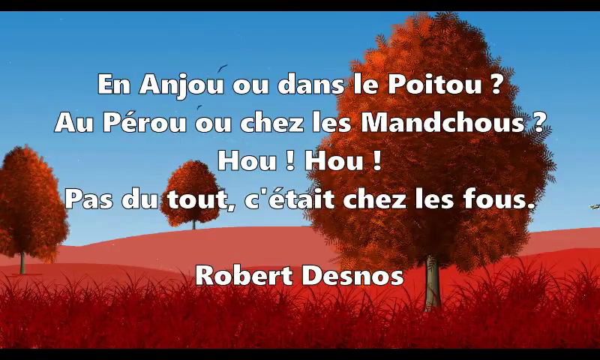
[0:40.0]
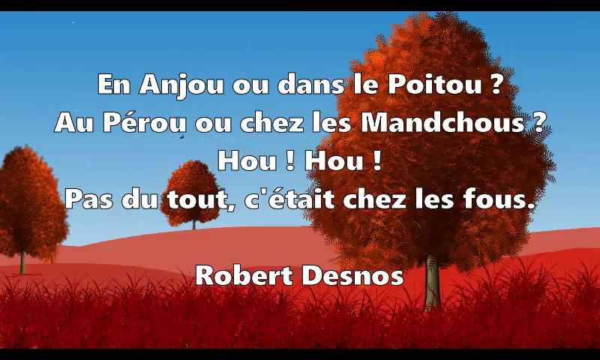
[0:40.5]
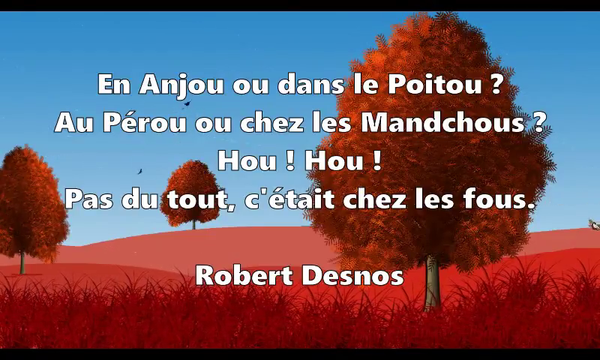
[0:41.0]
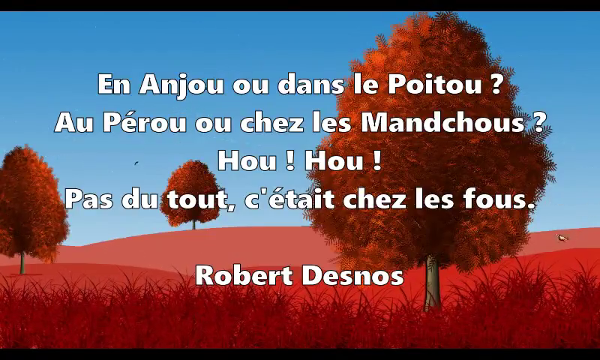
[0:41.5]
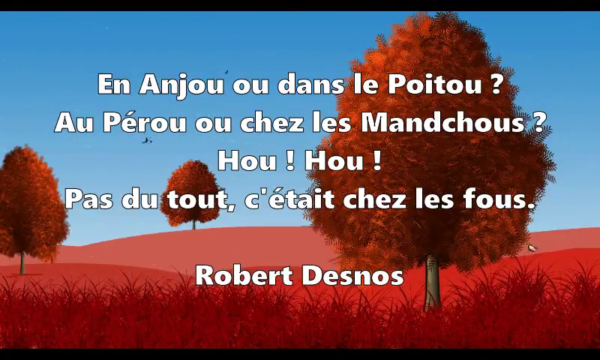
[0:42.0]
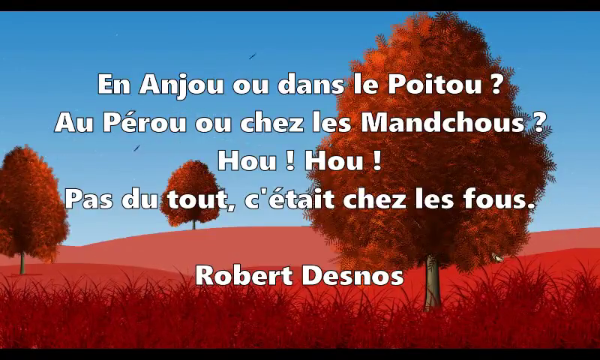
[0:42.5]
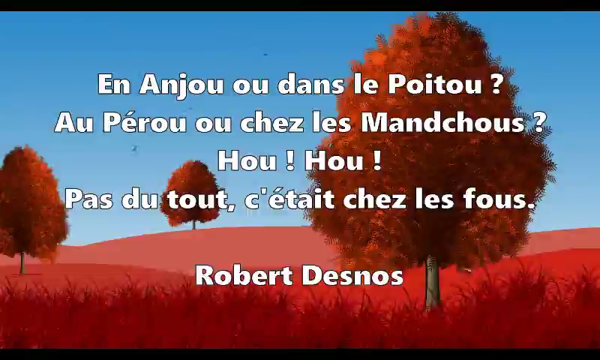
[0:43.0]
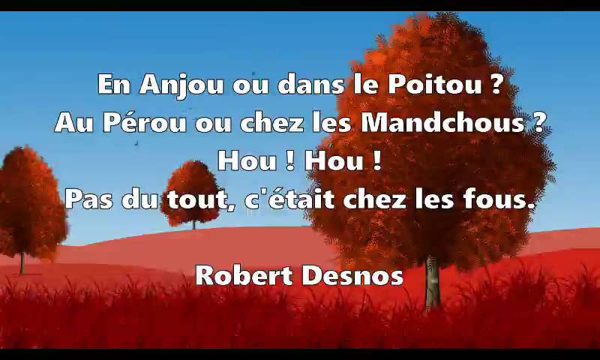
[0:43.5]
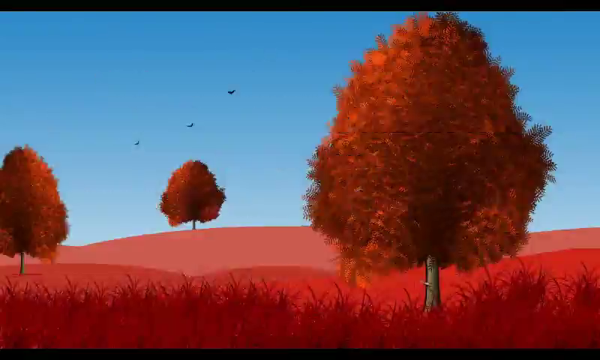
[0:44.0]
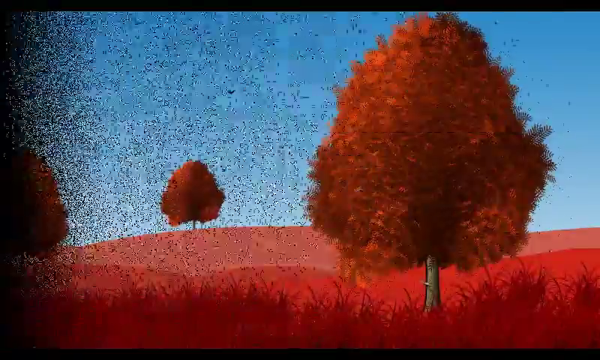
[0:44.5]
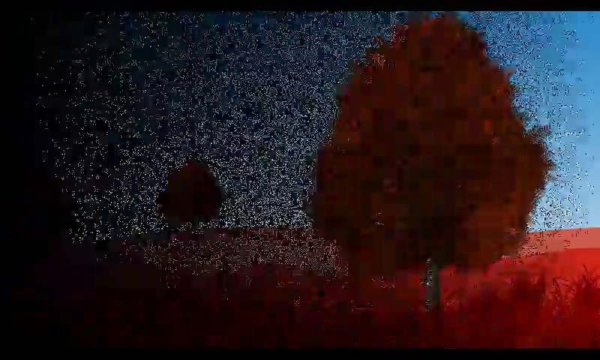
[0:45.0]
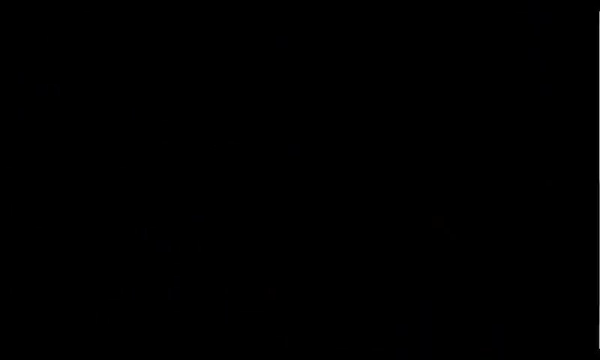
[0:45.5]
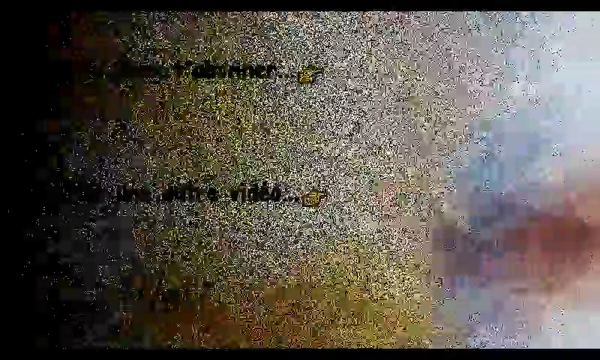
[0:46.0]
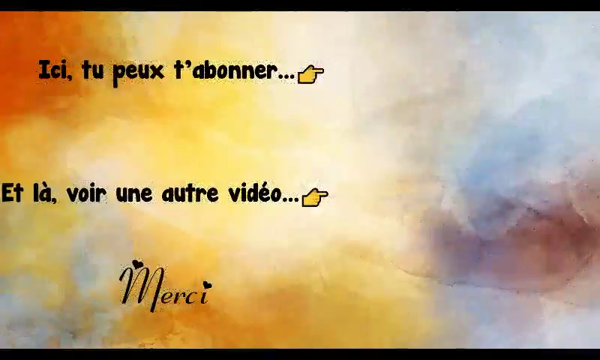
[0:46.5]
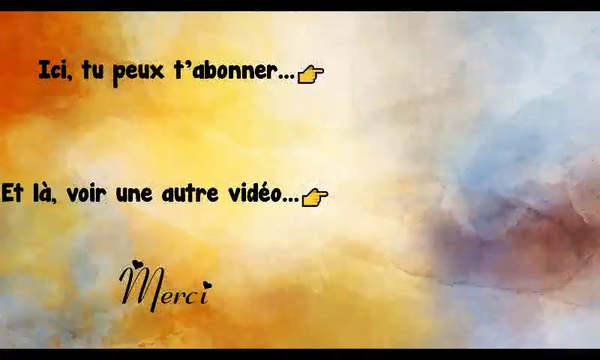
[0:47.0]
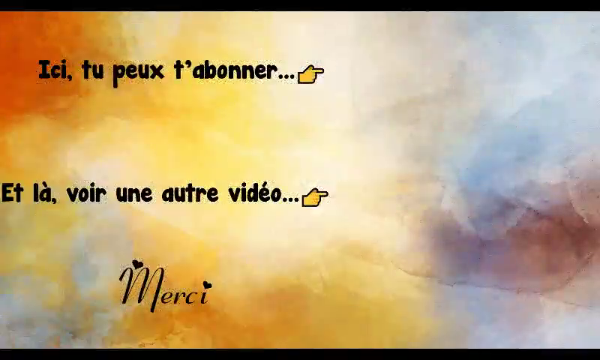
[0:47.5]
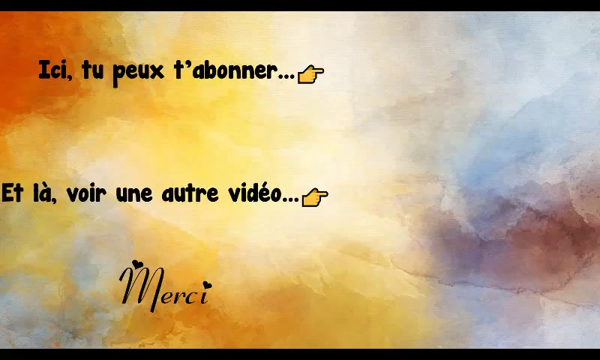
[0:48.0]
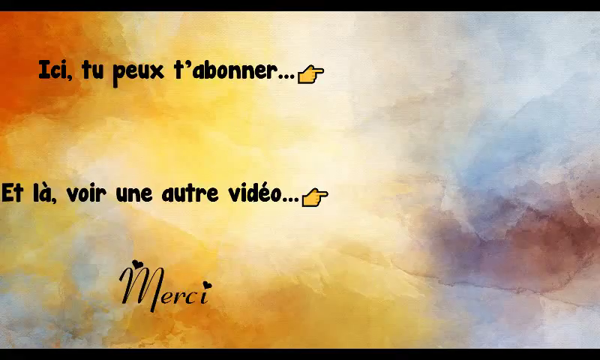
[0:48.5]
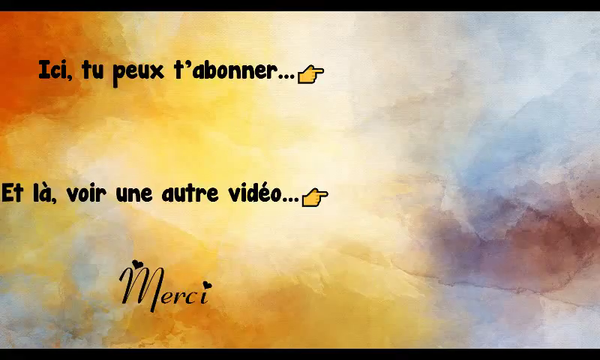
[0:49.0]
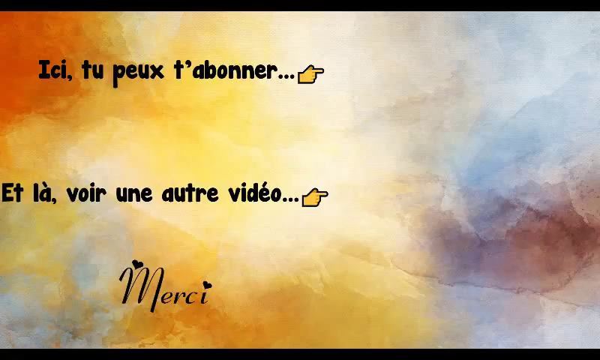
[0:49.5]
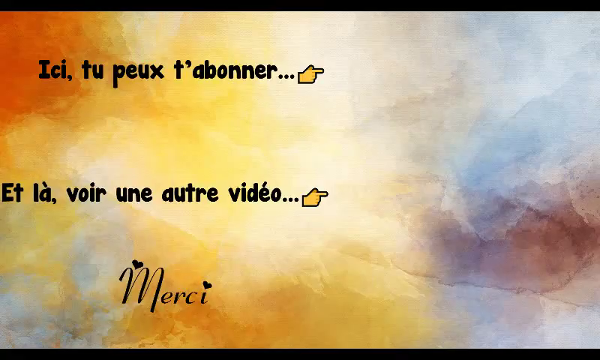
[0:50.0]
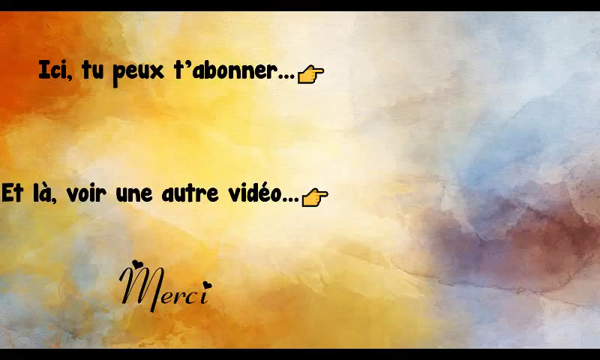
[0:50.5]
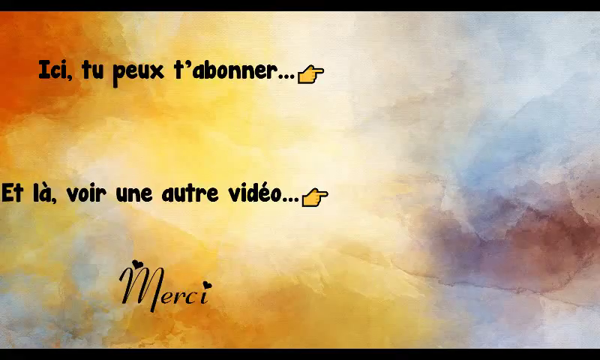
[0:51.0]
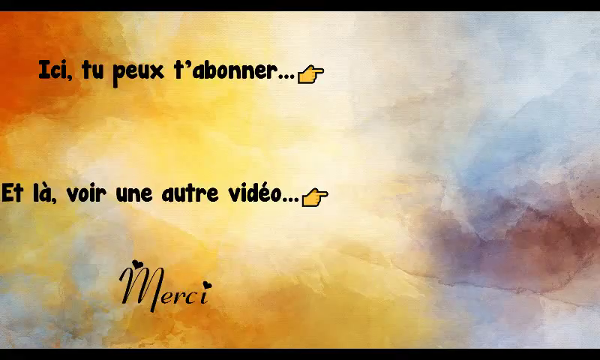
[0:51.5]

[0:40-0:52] Text is displayed over a motion background of an orange tree, red grass and blue sky, with white text in French over it. The background then transitions to a second one in a watercolour-painting style, coloured tan, blue, maroon and yellow. In the bottom left it says "Mircee", and there are two other separate lines of text, both in French. Each ends with an emoji of a finger pointing off to the right-hand side of the image.